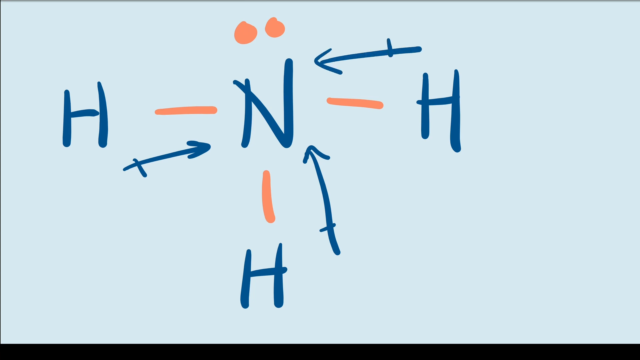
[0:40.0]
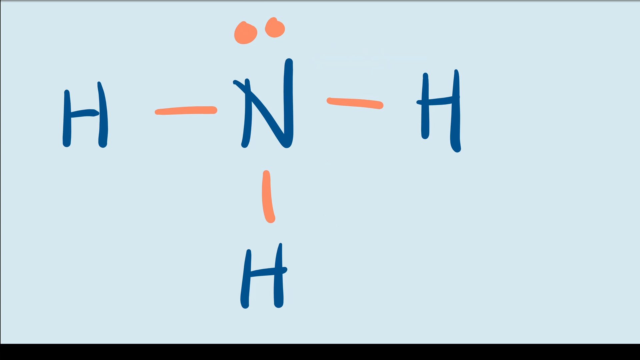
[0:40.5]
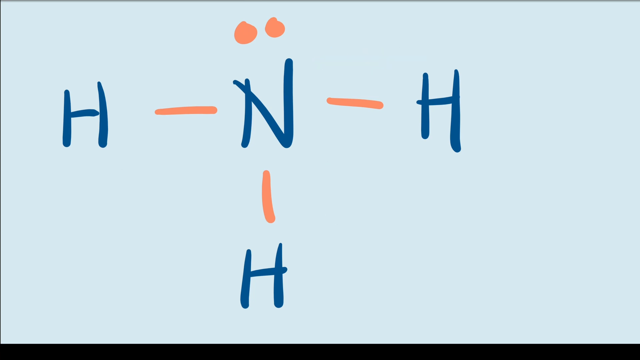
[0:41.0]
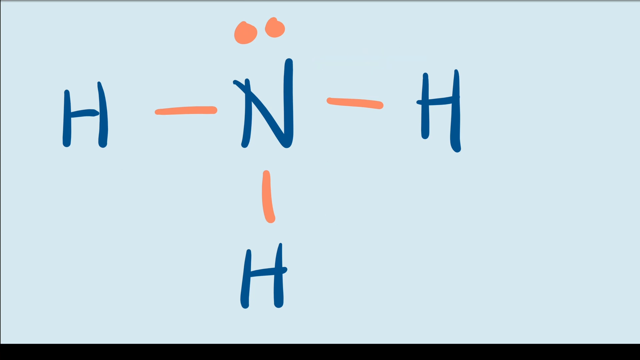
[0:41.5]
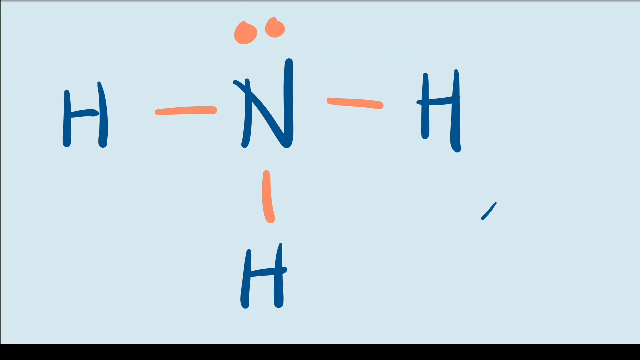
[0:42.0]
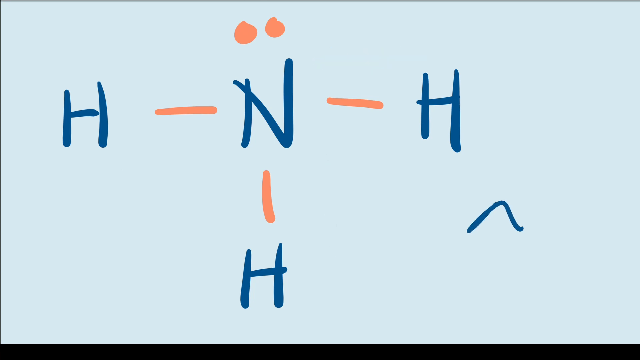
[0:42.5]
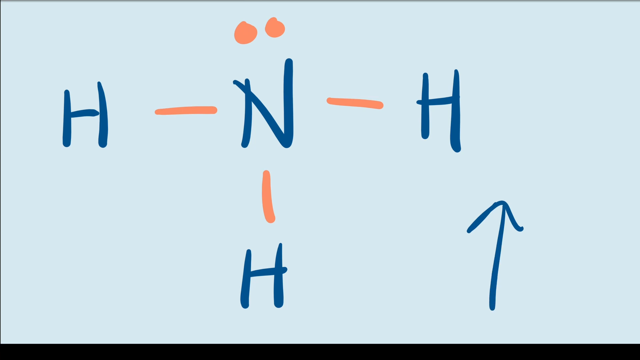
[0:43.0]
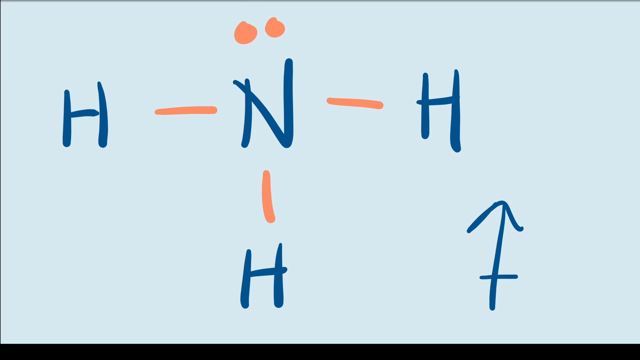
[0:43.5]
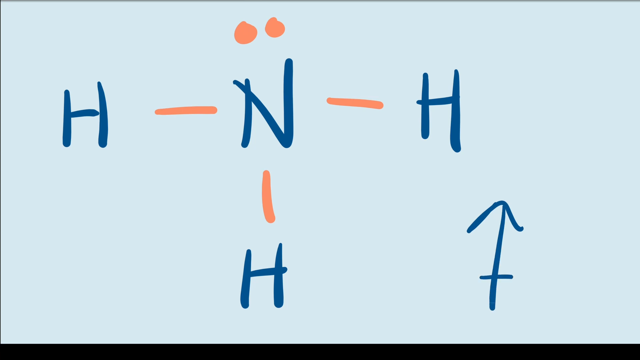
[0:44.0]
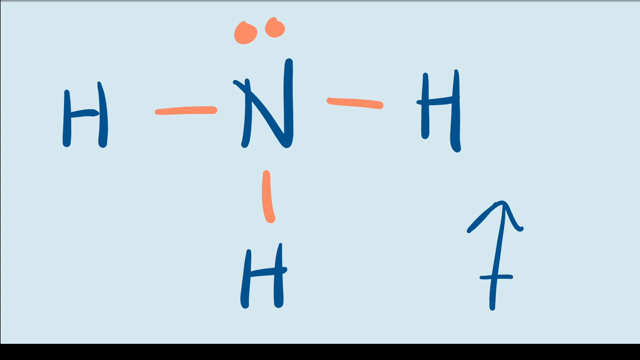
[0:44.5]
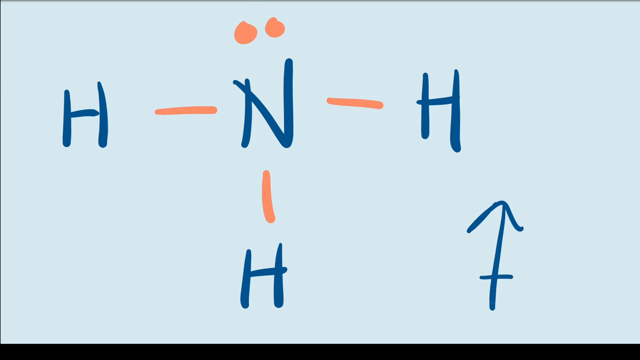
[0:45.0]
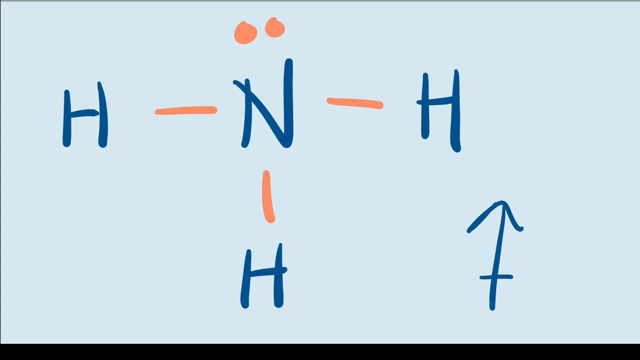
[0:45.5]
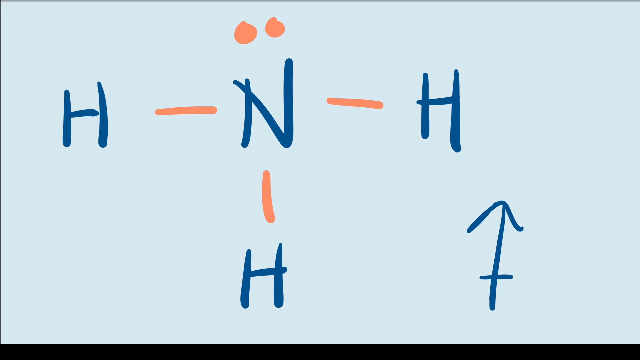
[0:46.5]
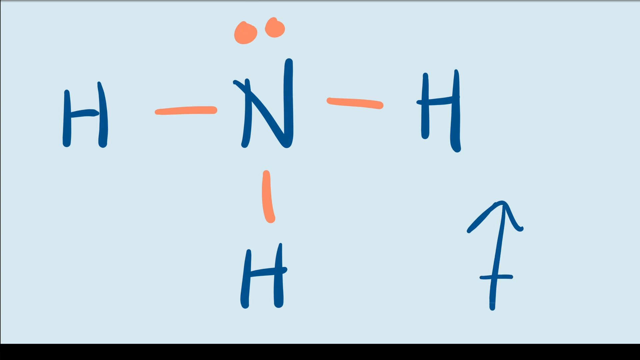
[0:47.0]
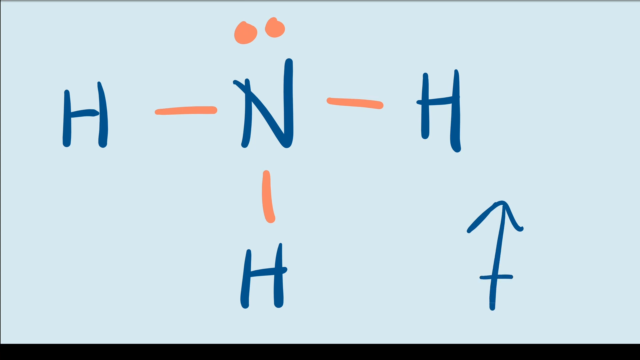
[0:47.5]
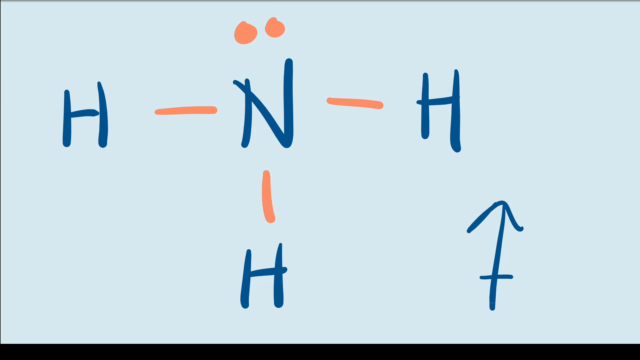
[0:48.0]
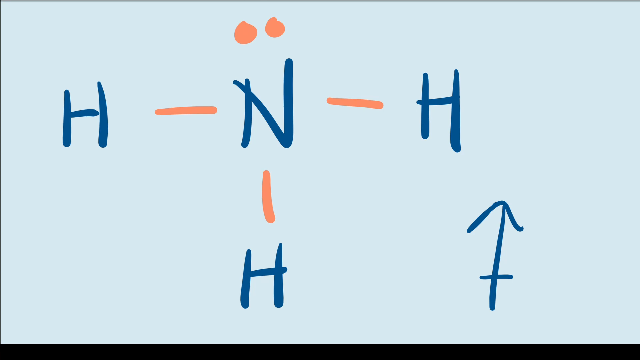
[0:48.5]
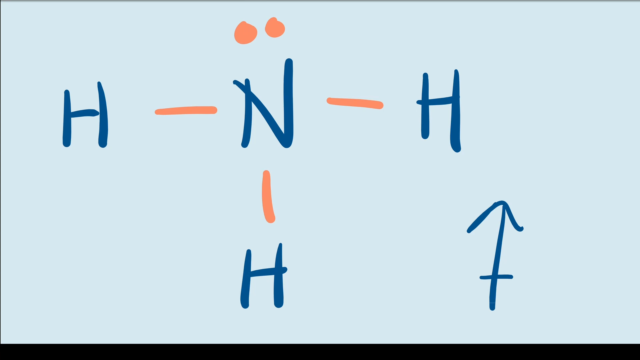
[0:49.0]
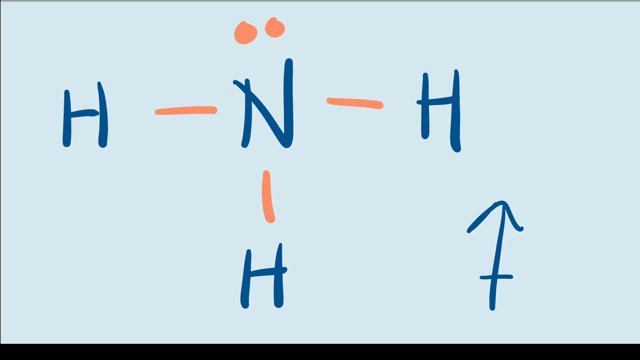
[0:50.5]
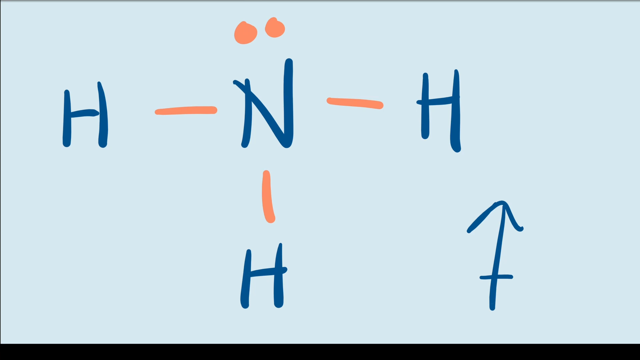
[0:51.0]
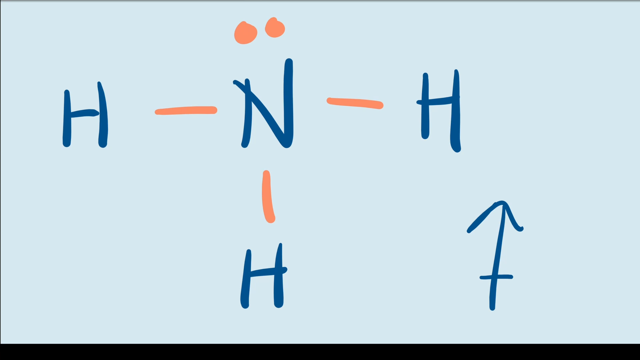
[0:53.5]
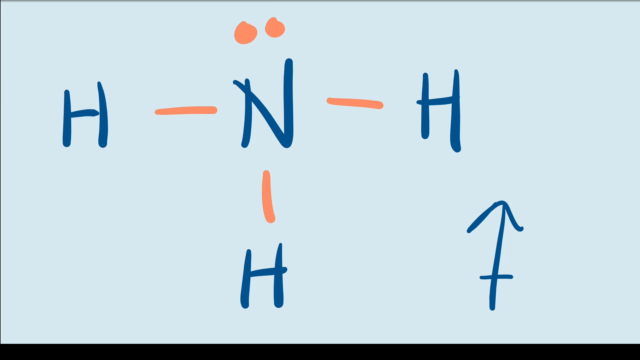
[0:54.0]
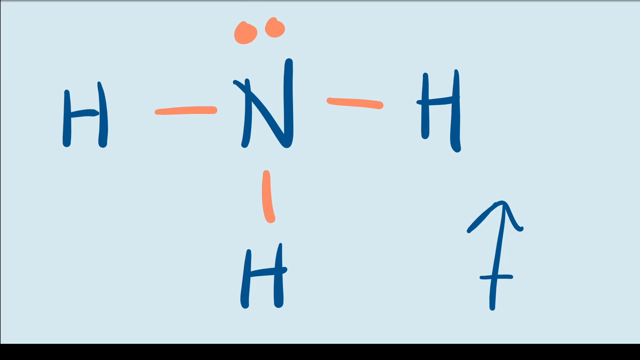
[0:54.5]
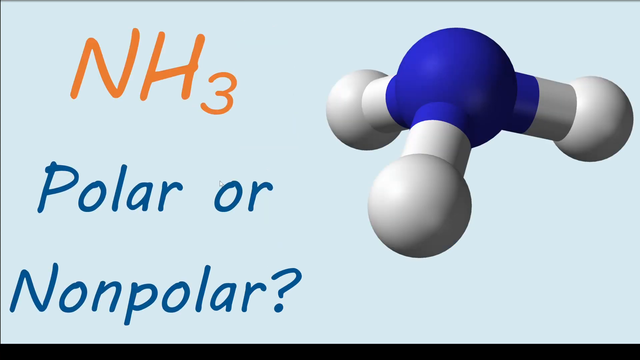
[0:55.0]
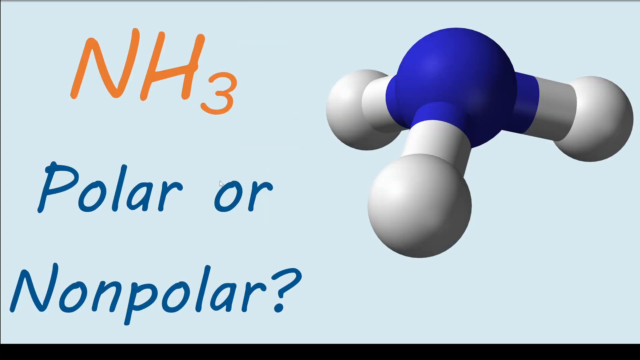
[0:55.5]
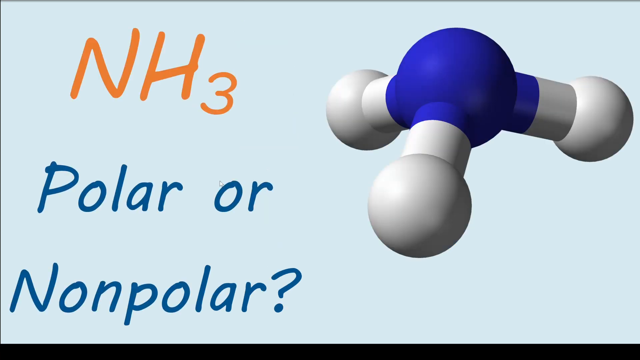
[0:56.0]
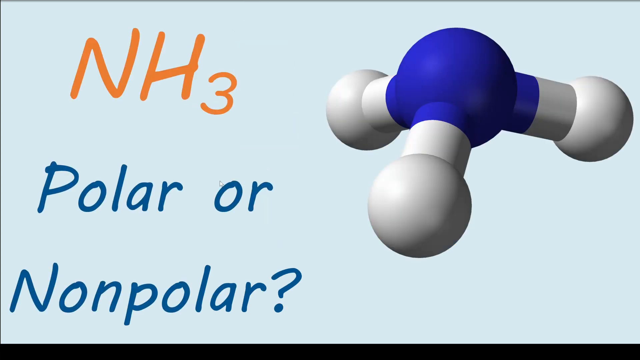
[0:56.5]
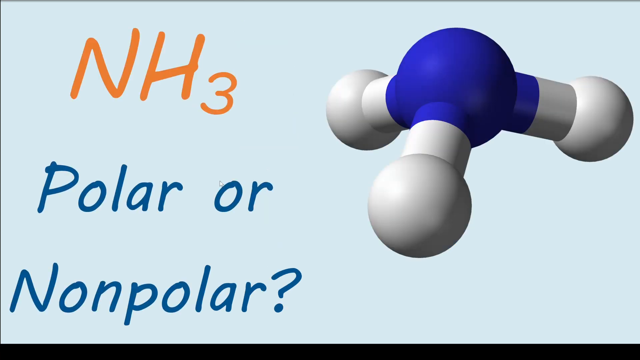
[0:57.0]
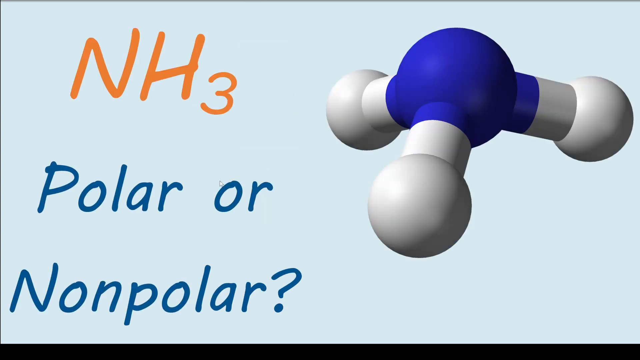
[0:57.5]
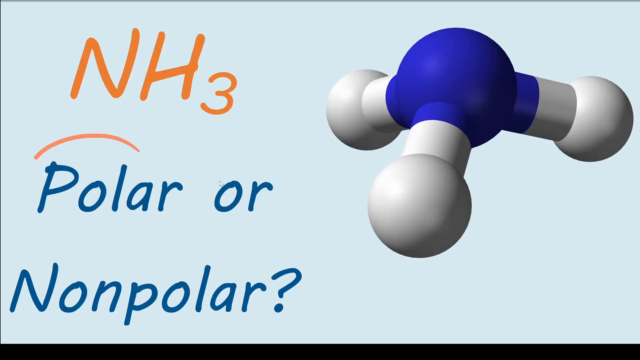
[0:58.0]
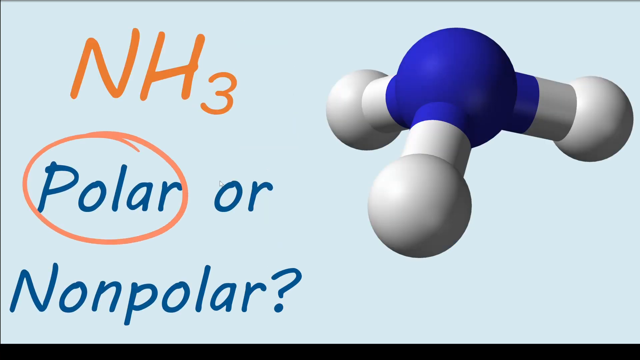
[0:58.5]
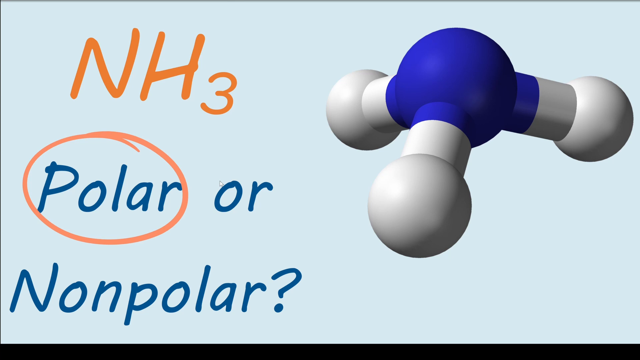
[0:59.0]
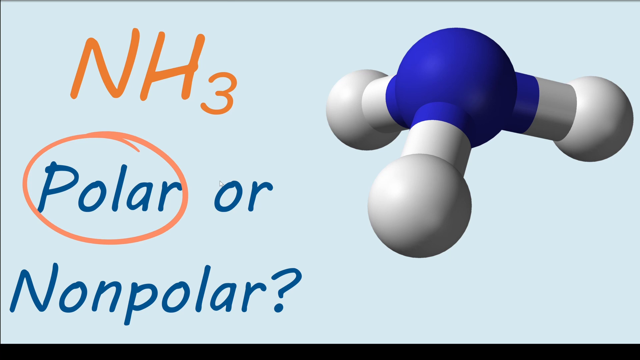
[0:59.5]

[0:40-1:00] On the molecule diagram with the arrows, the arrows are erased and new arrows are drawn, including one all the way to the right that is not necessarily pointing to anything. There is no other motion for quite a while. The video then goes back to the original slide reading "NH3 polar or nonpolar", and a circle is drawn around "polar". It then returns to the molecule diagram and stays on it for a bit.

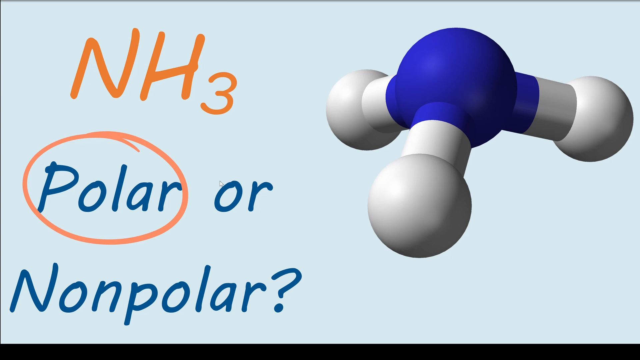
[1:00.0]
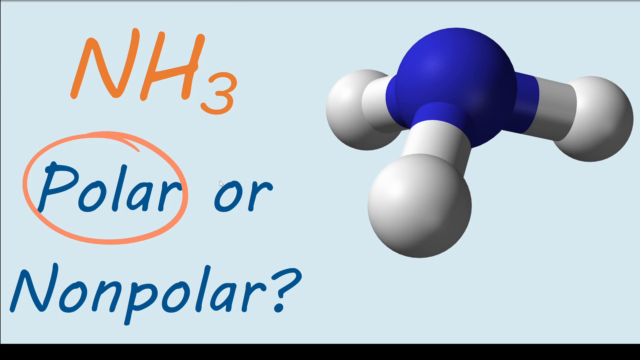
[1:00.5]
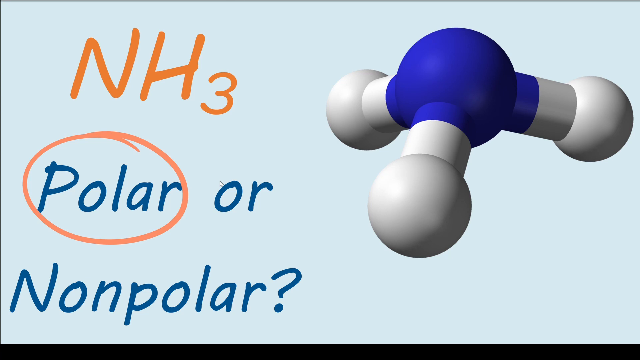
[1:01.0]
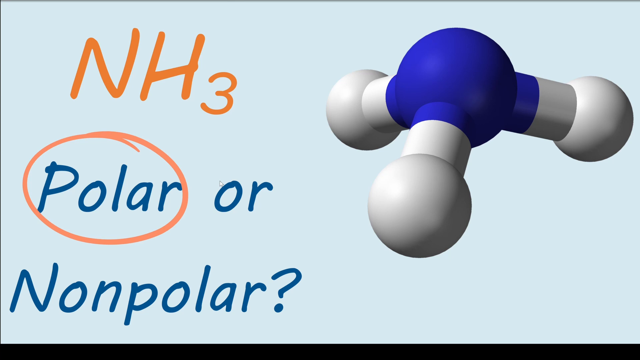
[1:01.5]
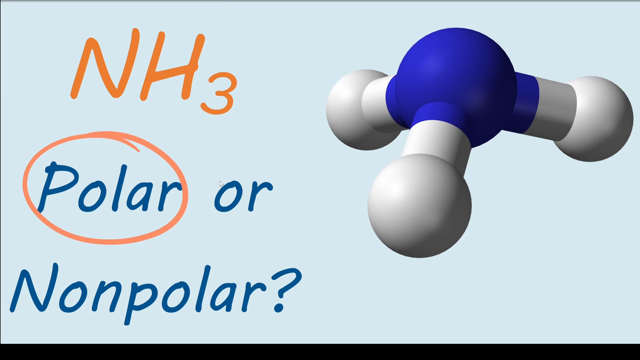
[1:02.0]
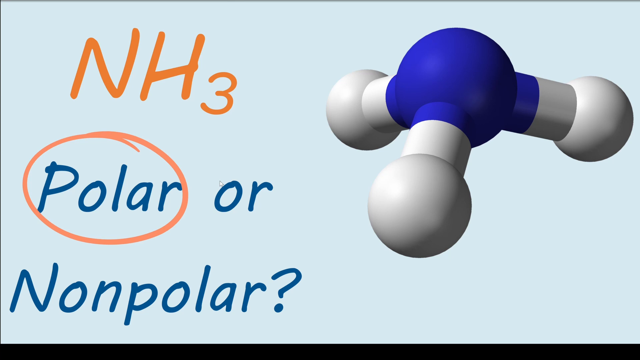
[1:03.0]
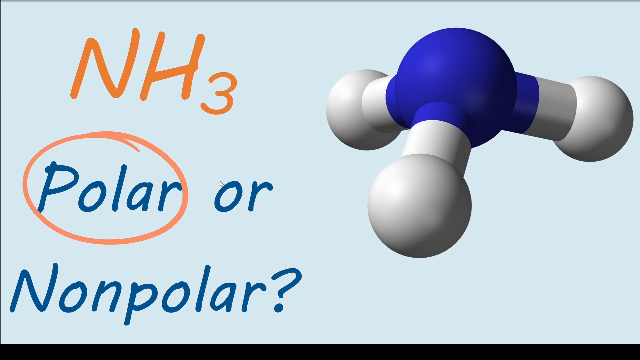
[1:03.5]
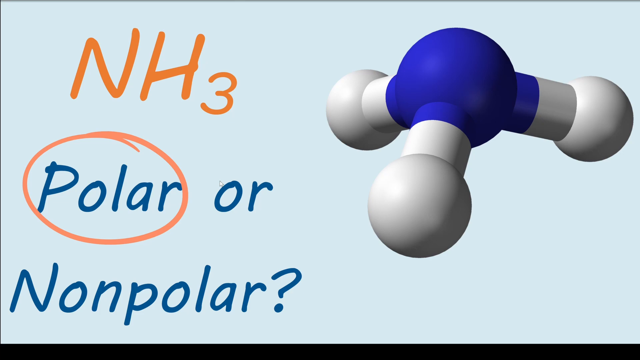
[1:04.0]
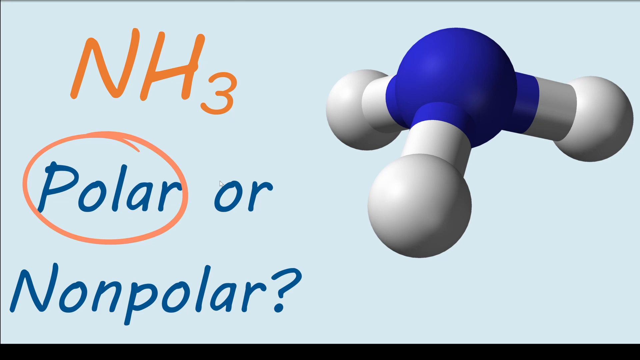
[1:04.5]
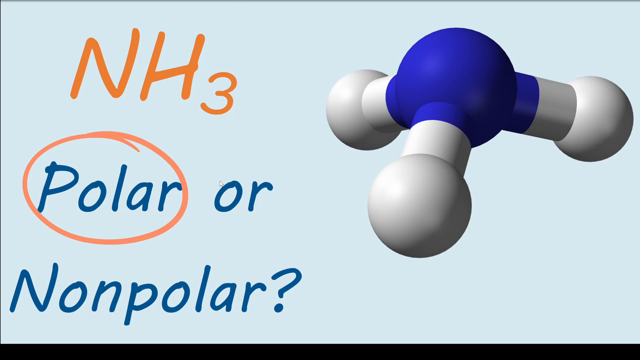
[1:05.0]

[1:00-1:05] The title slide is shown, nearly still, with "NH3" in orange and "polar or non-polar" with a question mark in blue. "Polar" is circled in orange. A molecule graphic has three white legs and a blue center. The background is light blue, or maybe an off-white or kind of grayish color. There is no motion.